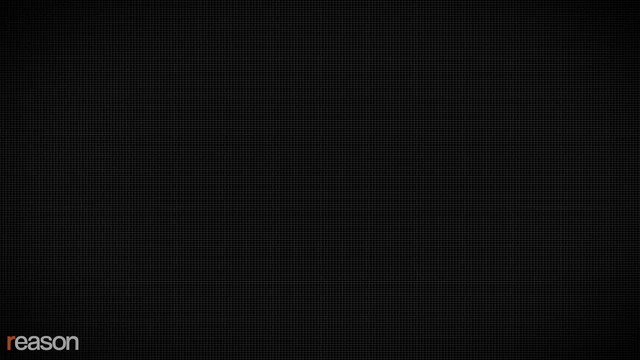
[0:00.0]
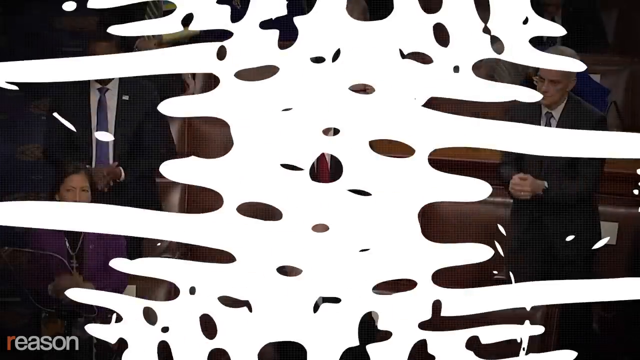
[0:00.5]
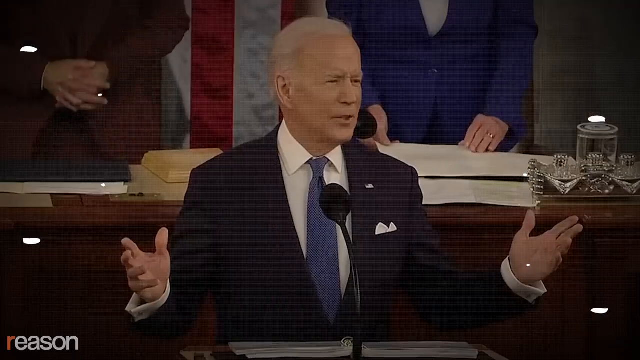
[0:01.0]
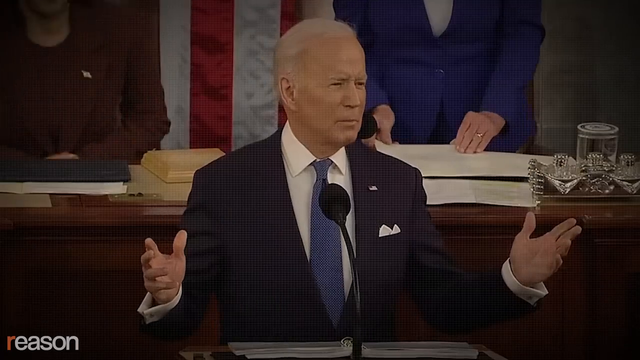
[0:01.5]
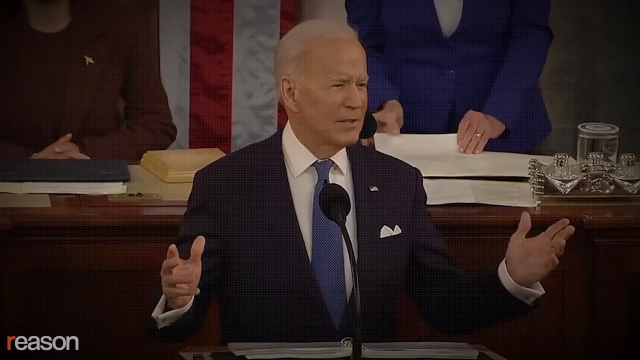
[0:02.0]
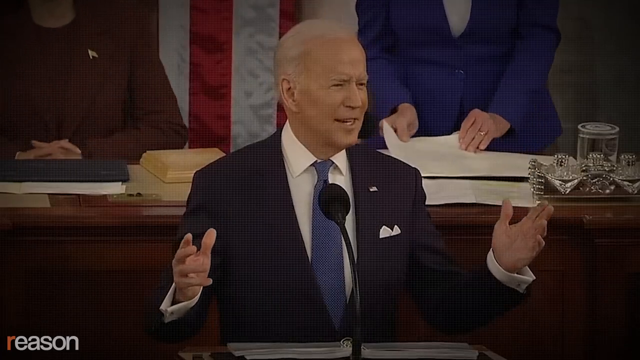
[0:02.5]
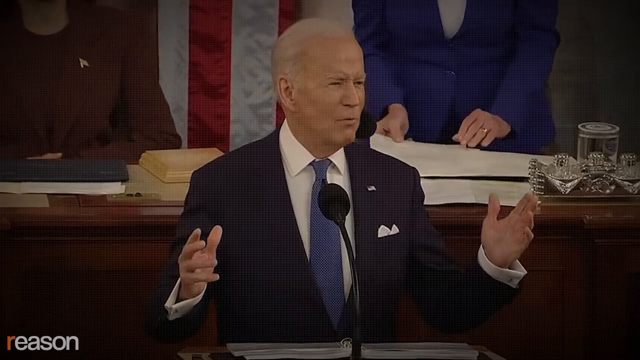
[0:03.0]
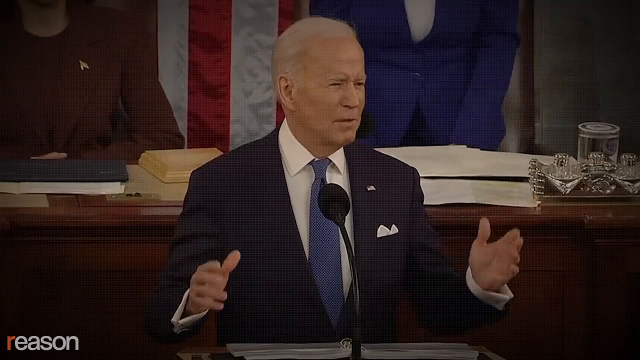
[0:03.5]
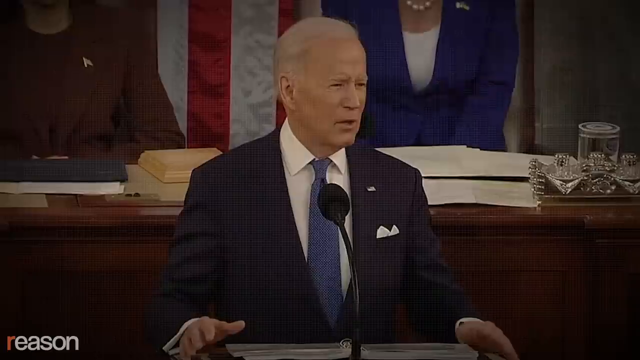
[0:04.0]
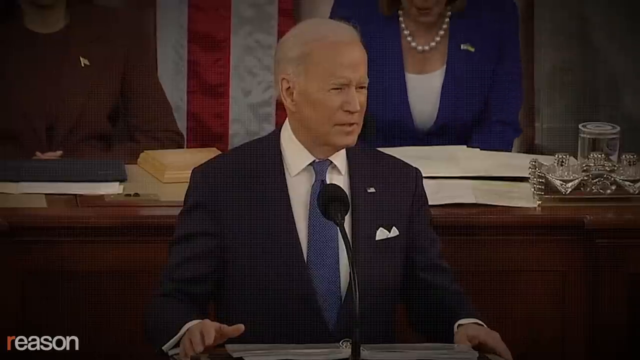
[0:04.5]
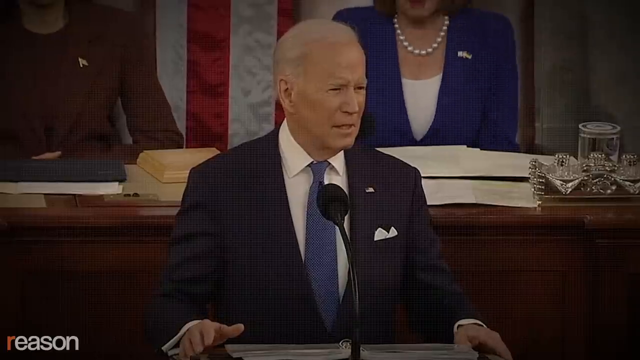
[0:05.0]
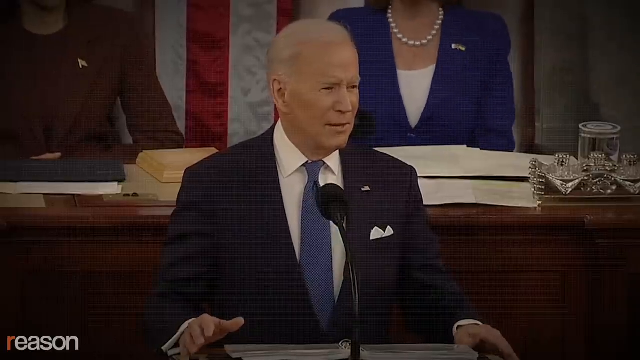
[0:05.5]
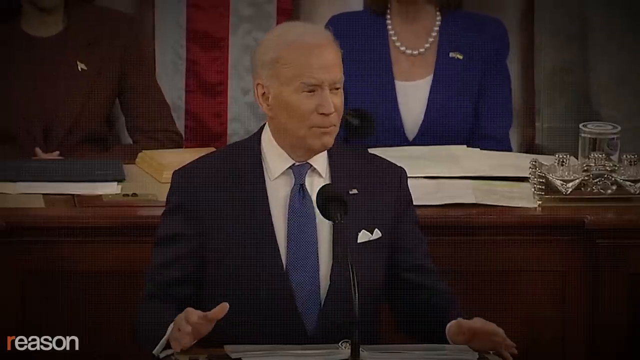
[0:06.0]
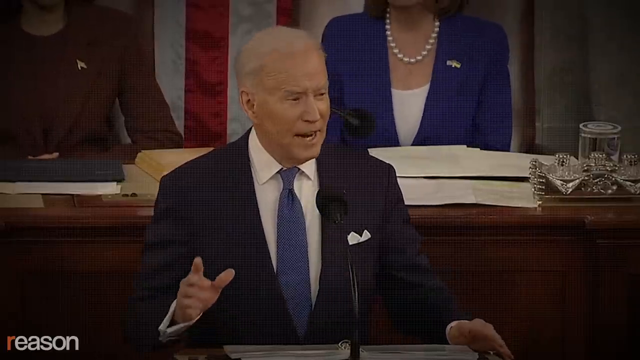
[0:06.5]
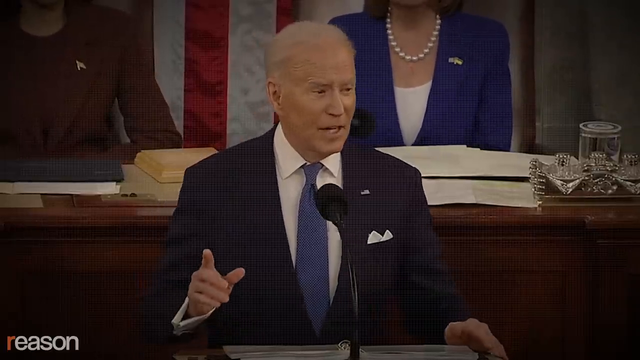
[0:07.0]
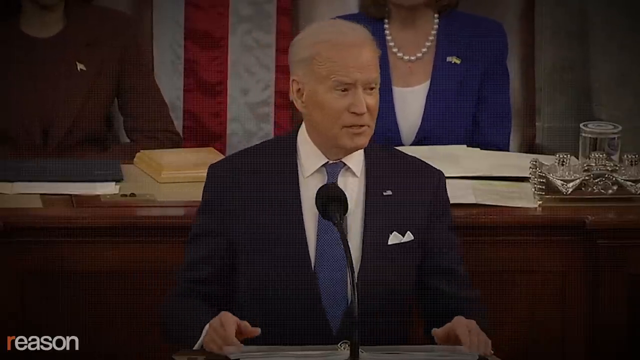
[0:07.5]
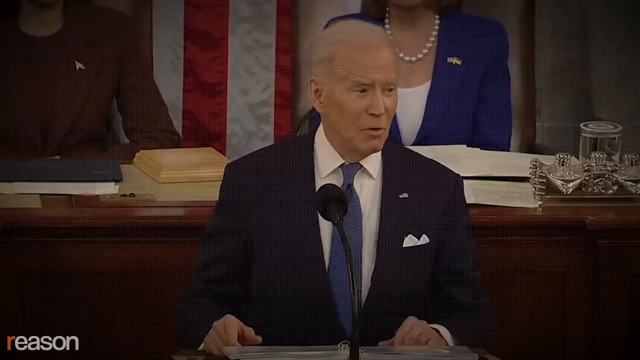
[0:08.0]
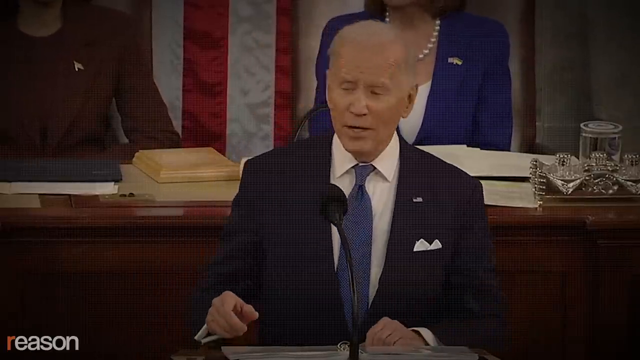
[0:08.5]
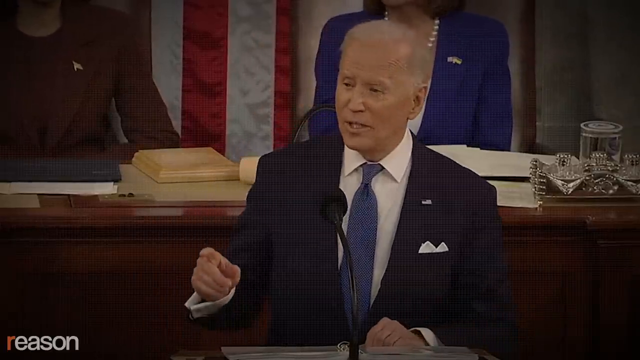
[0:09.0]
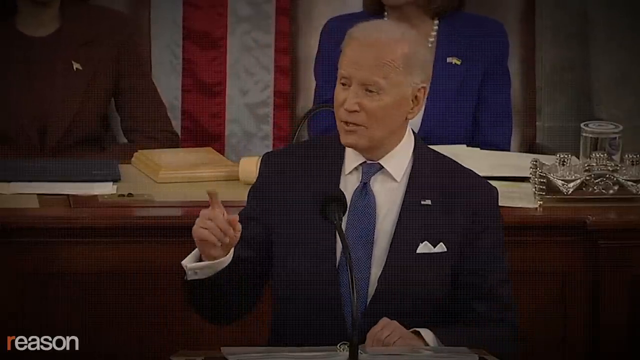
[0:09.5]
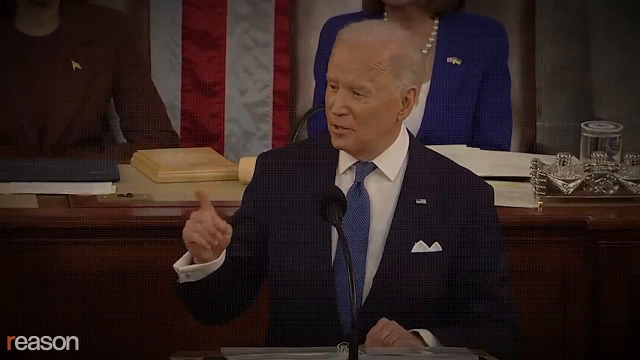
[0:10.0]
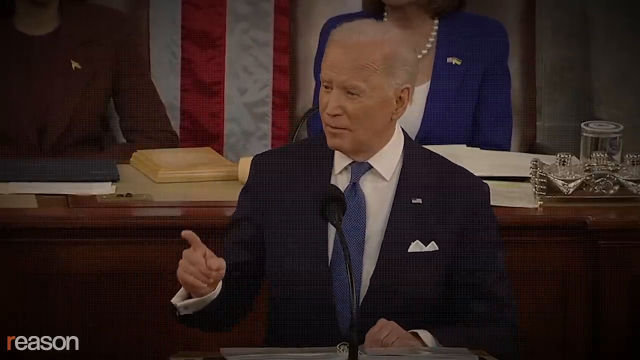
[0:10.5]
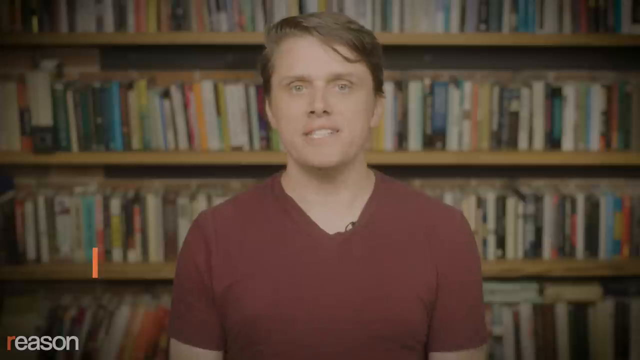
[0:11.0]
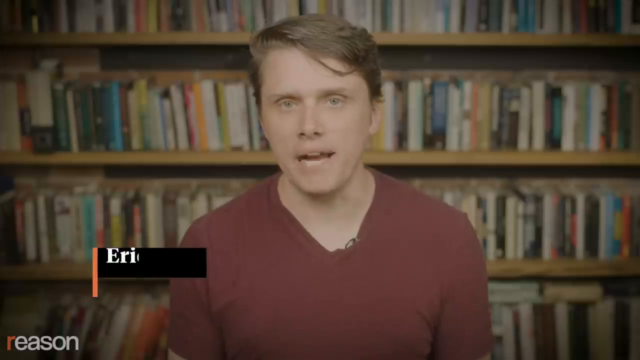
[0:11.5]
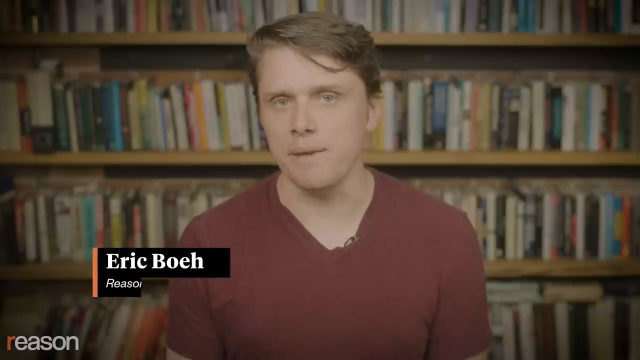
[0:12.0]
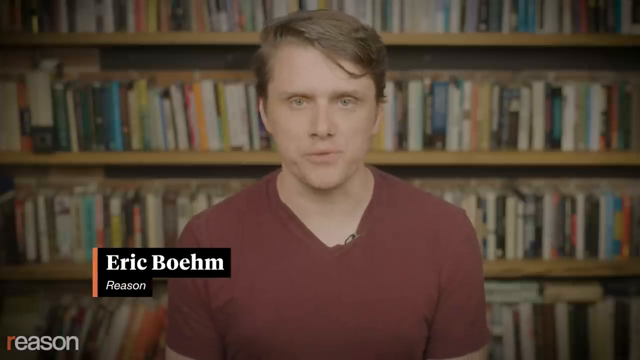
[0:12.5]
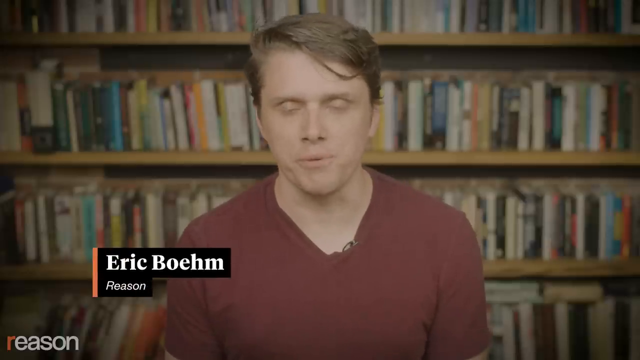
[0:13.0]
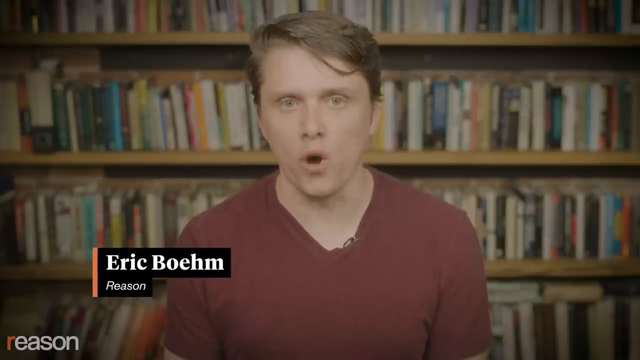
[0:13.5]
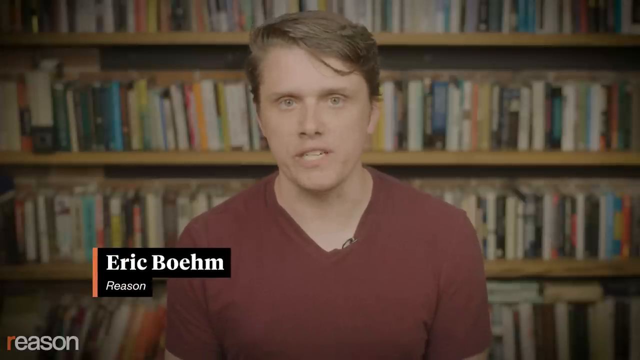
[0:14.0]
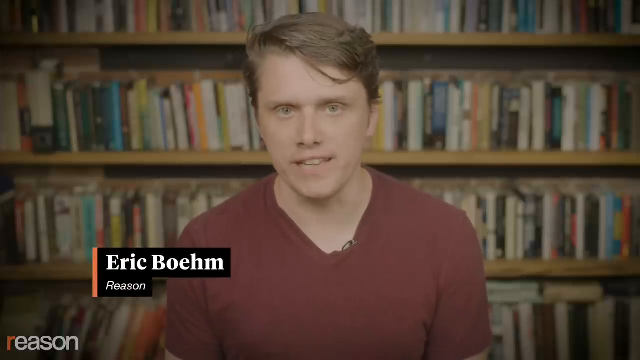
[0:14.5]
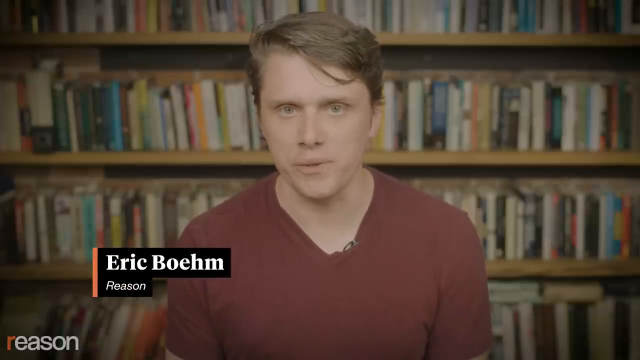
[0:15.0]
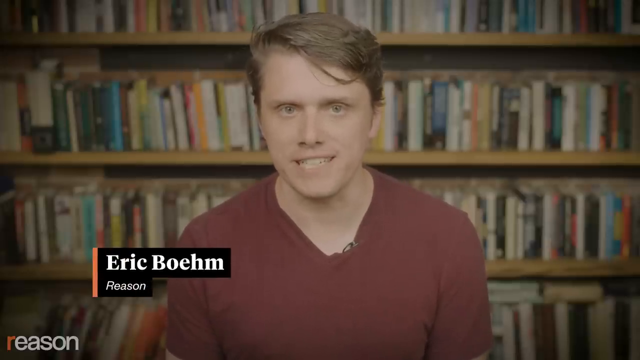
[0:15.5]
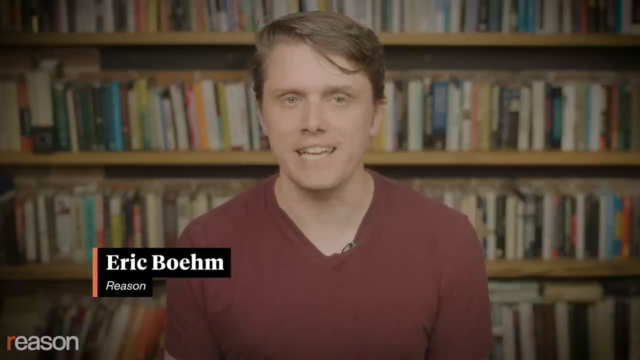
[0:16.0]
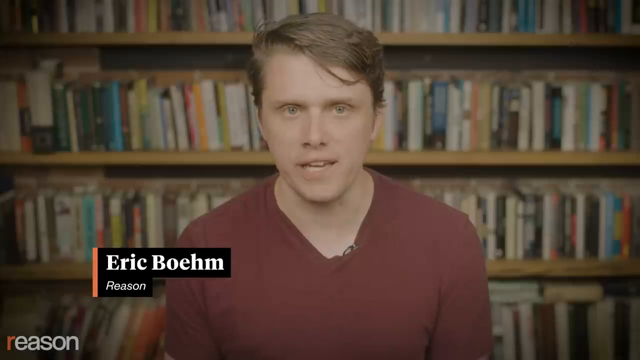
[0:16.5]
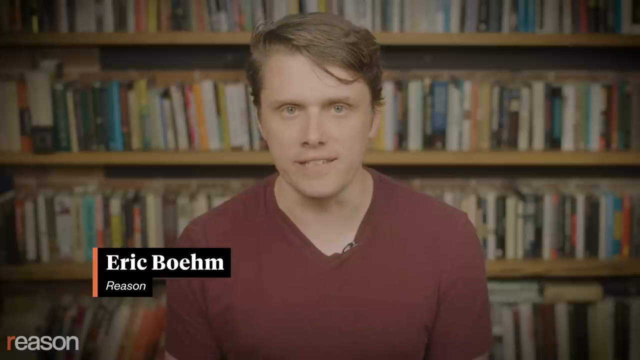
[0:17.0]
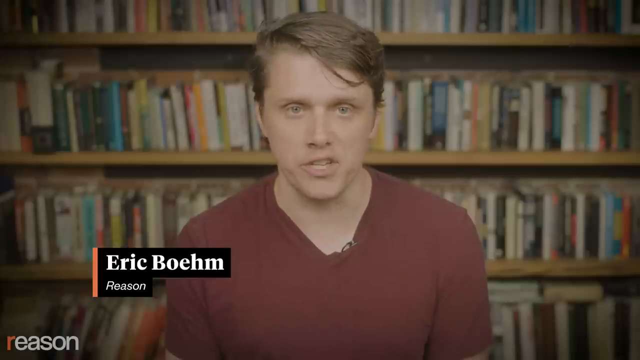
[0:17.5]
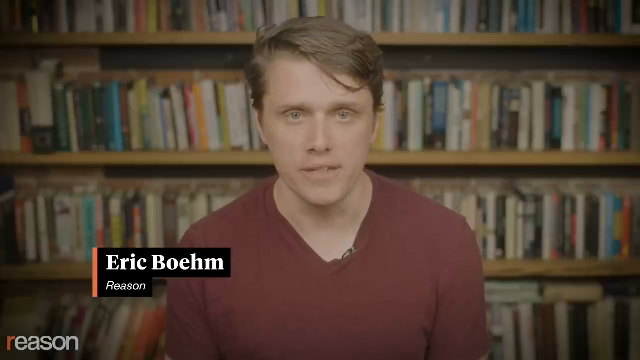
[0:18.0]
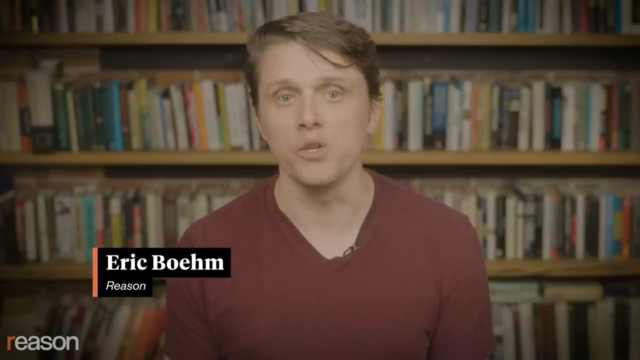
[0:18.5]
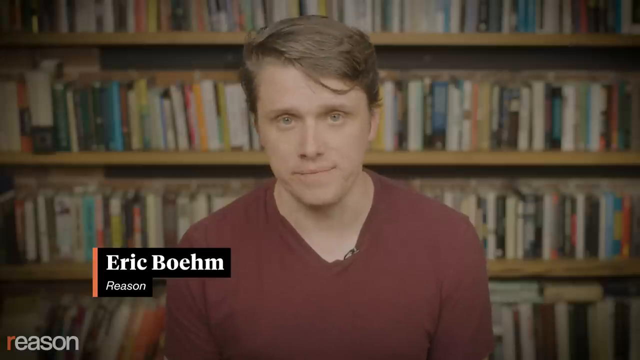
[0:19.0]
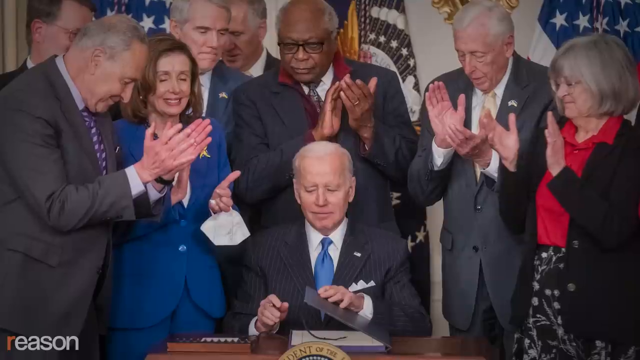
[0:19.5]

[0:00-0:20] After a very brief animation, Joe Biden, described as a former President of the United States, speaks while standing at a platform in a suit. The video cuts to a man named Eric, who seems to be giving some kind of opinion, possibly about what Biden just said. Next comes a brief still picture of Biden sitting down with people behind him, apparently at least about seven of them, crowded around him. Their faces look relieved, possibly as if some kind of victory or bill had been passed.